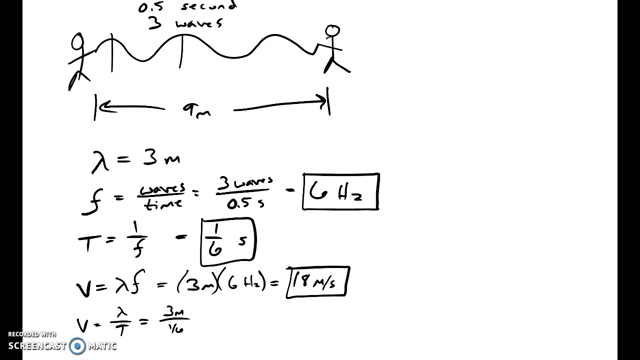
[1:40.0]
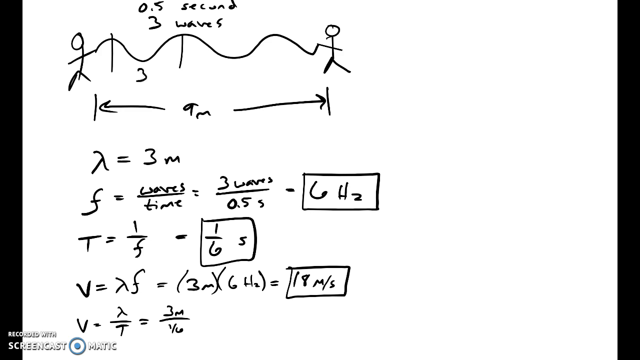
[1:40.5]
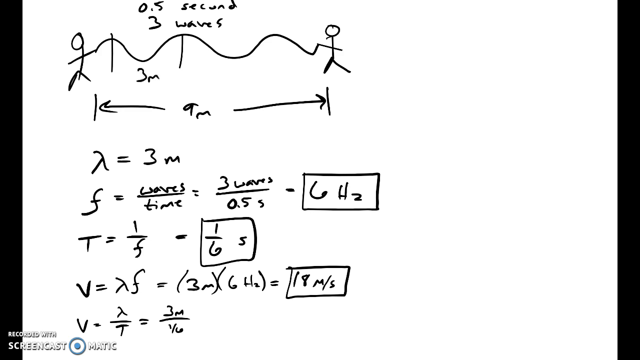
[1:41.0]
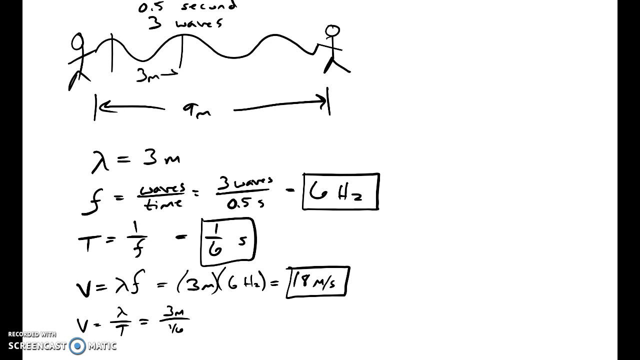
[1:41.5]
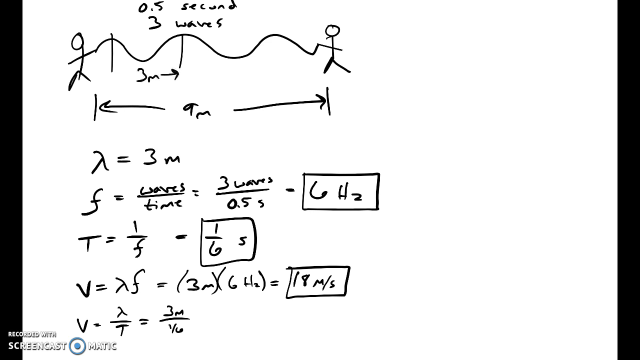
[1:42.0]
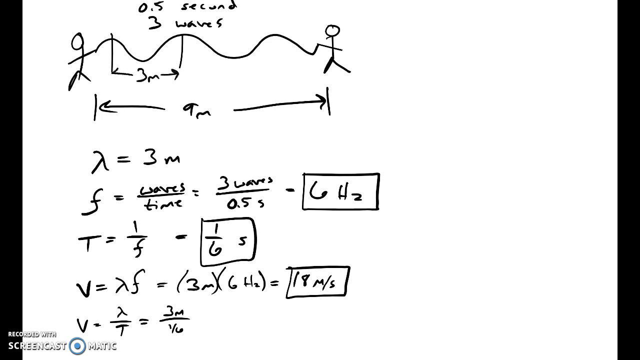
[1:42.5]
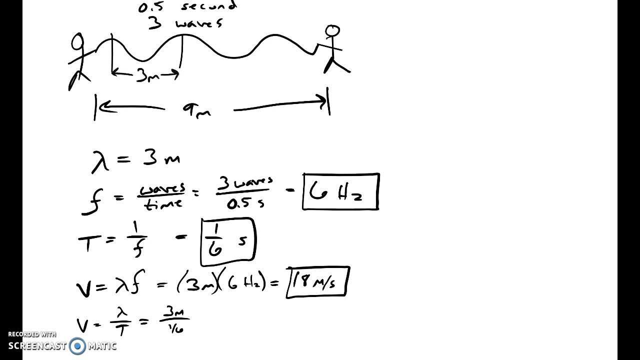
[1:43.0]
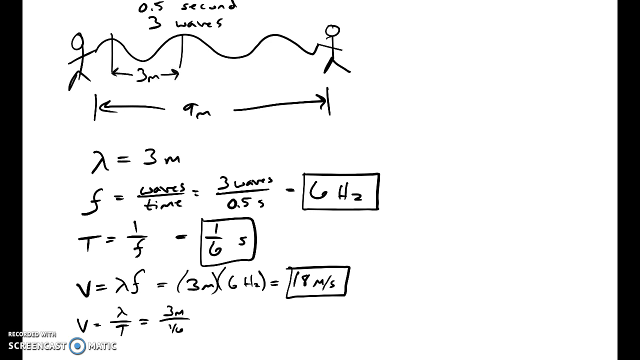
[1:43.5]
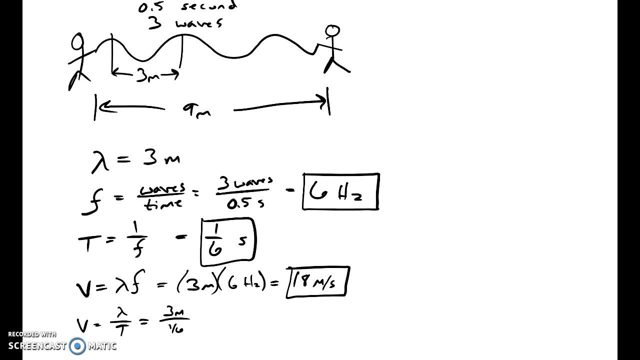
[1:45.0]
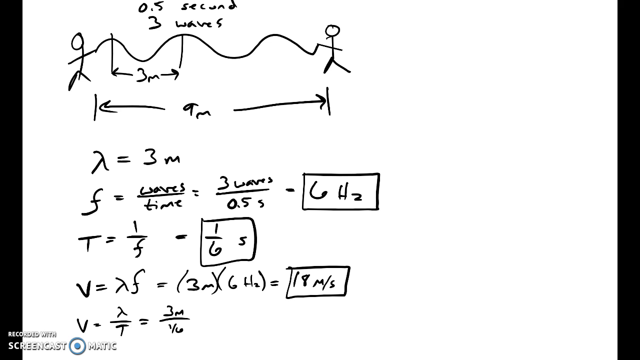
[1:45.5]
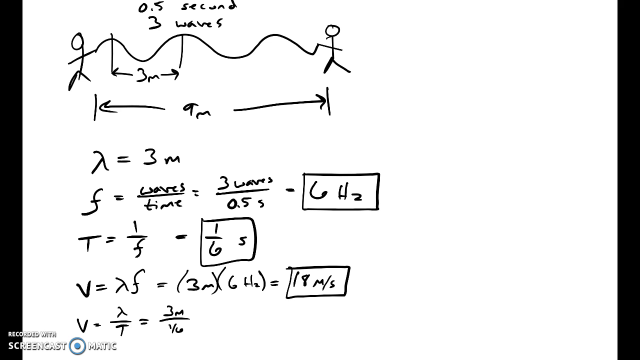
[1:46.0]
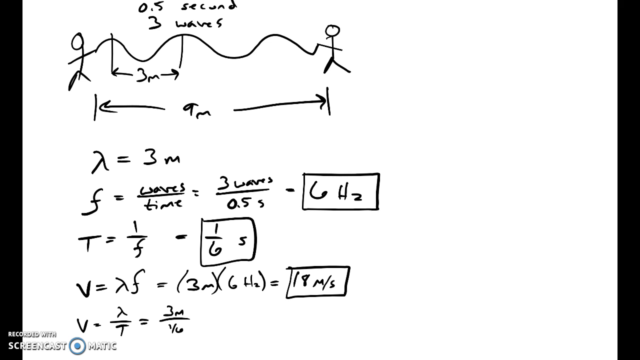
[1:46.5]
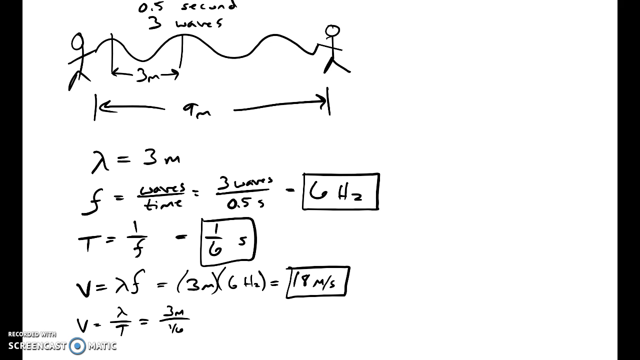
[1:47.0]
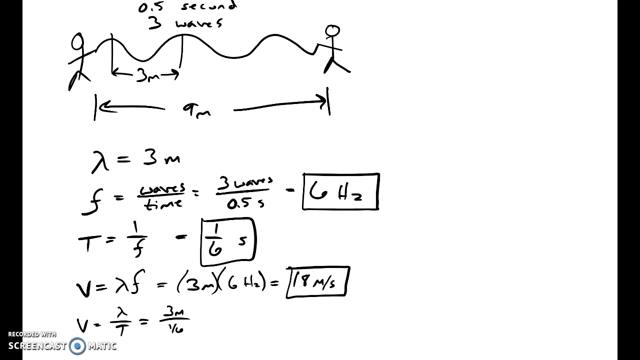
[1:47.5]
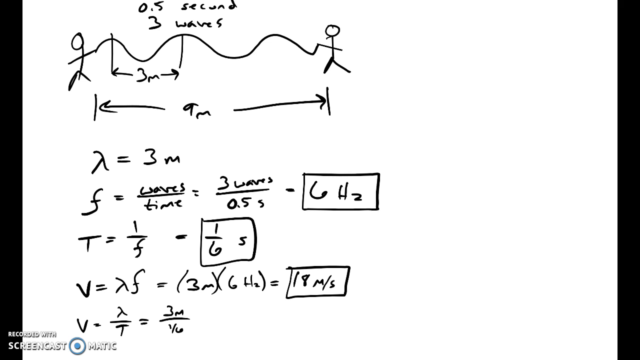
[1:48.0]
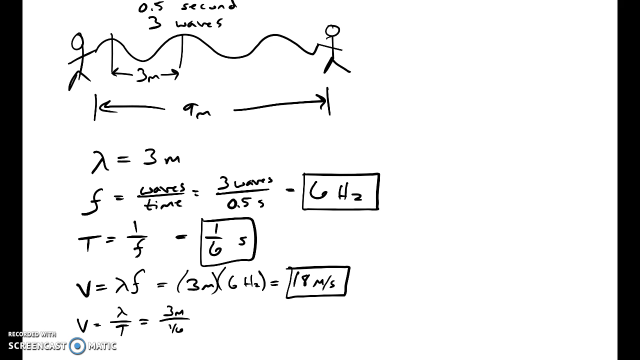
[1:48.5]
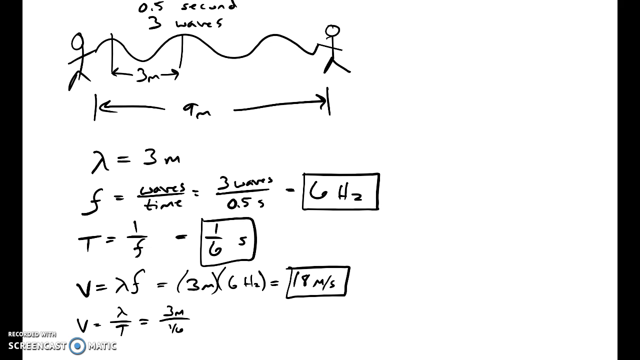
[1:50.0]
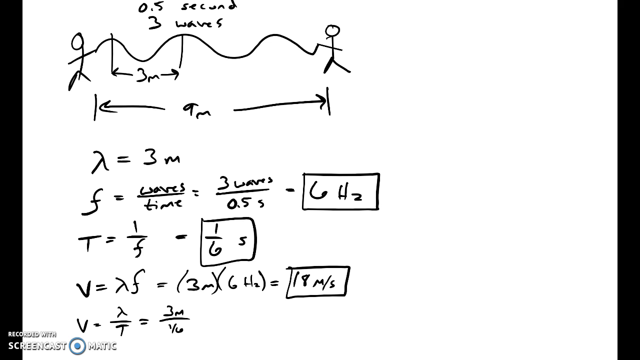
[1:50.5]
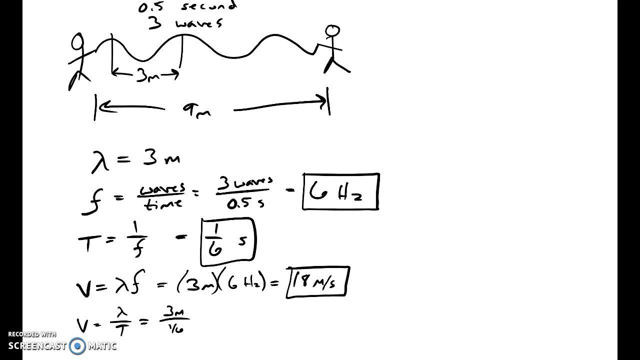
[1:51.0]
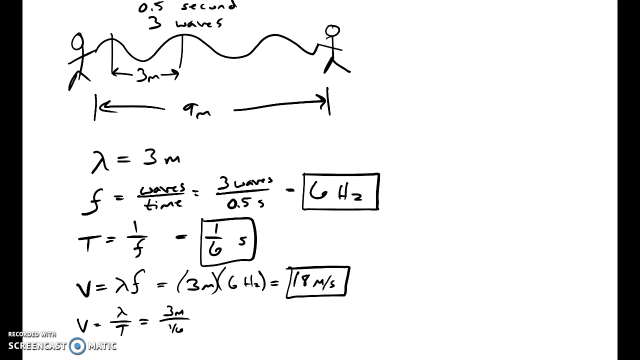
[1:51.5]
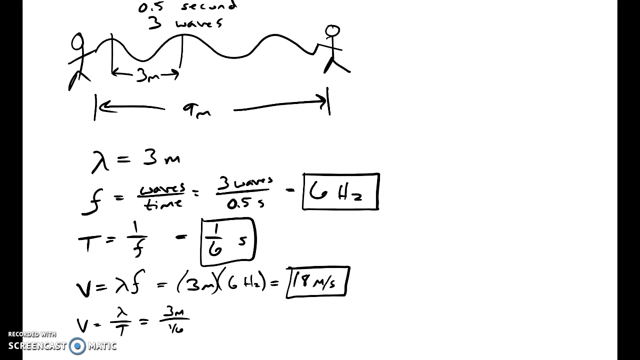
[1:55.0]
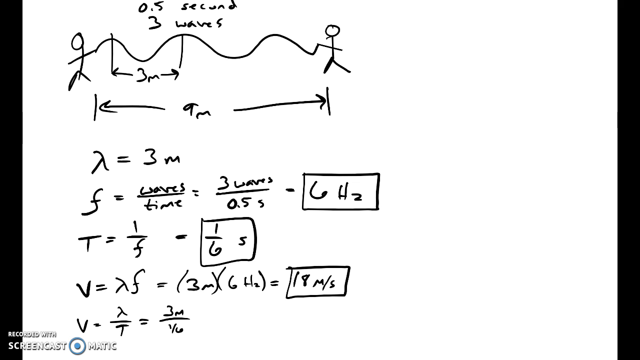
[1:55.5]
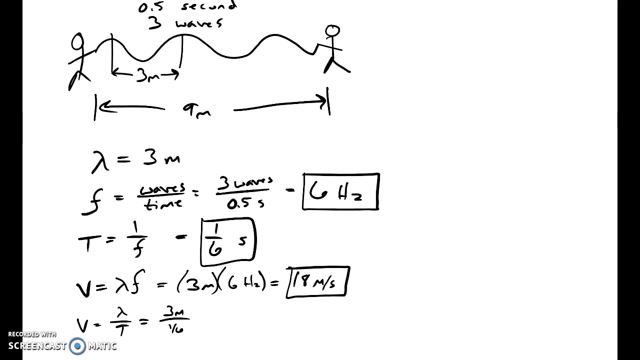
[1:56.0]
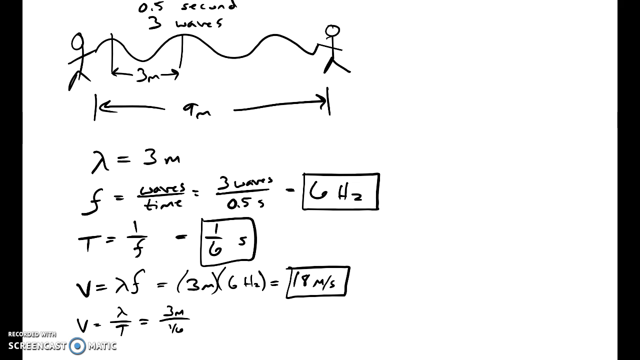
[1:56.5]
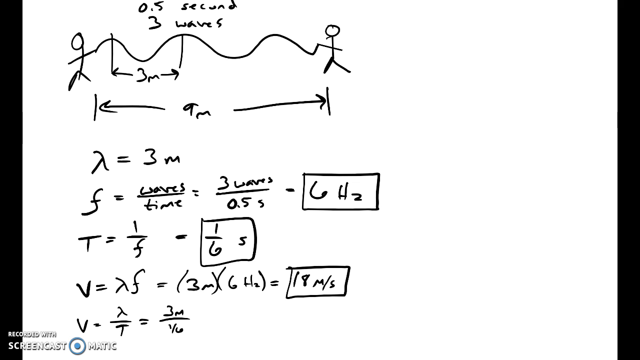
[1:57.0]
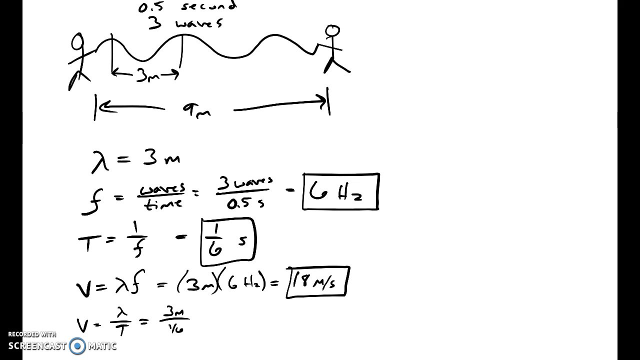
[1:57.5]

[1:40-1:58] Two perpendicular lines are at the squiggly line connecting the stick figures, toward the left-hand side of the screen. One is slightly above the squiggly line, and the other is kind of perpendicular but angles toward the left-hand side of the screen. Between the two lines, someone writes "3M" with arrows: one arrow to the left and one to the right of the 3M, each pointing at one of the perpendicular lines. The writing is smooth but not perfect. The left arrow touches the left perpendicular line, while the right arrow points slightly below the right perpendicular line, which is kind of spaced a little oddly. The squiggly line is connected to the stick figures' arms at their hands, and a 3M now appears underneath the left-hand side of the squiggly line, with the two perpendicular lines connected by arrows.